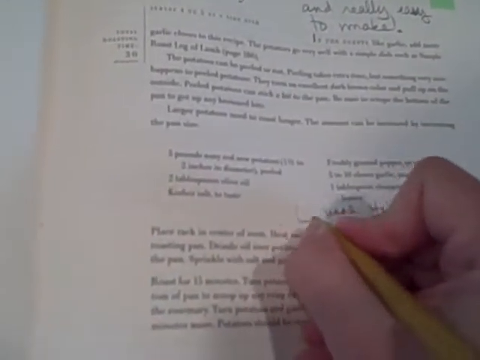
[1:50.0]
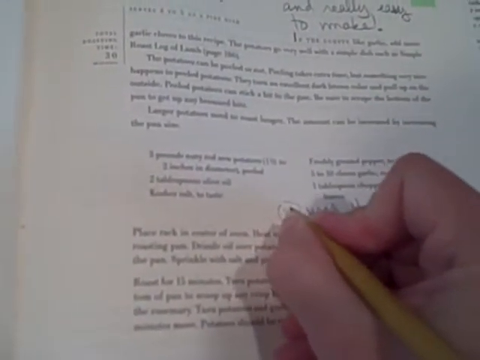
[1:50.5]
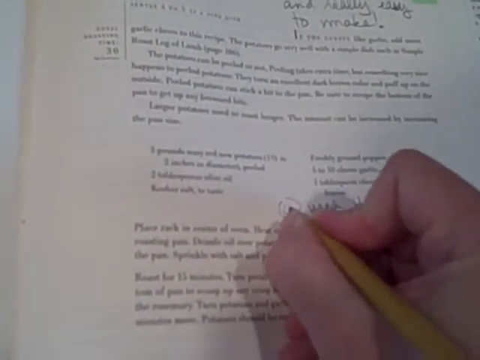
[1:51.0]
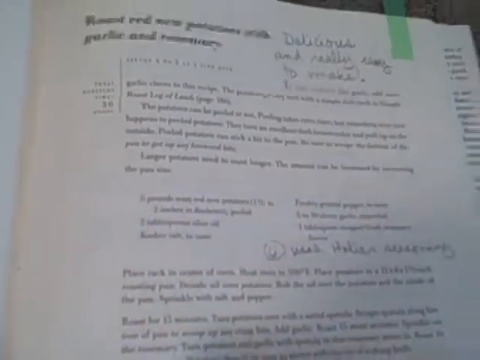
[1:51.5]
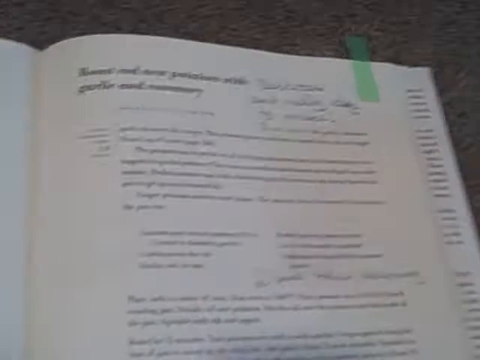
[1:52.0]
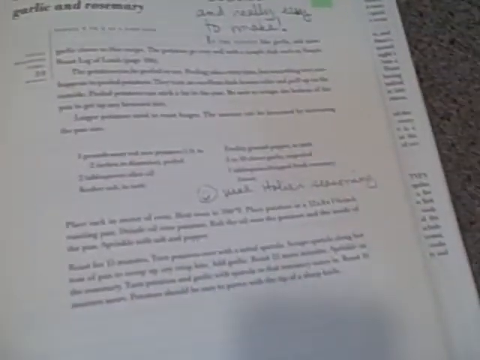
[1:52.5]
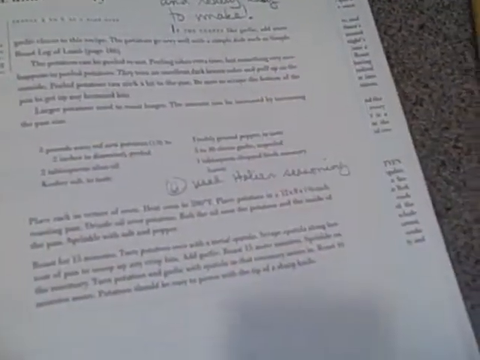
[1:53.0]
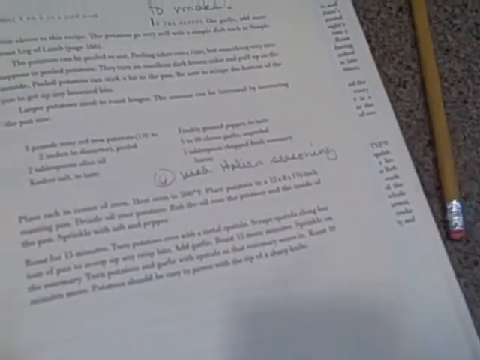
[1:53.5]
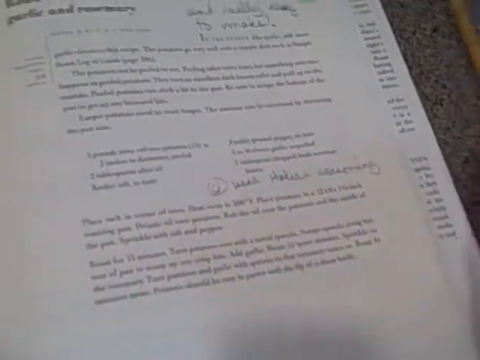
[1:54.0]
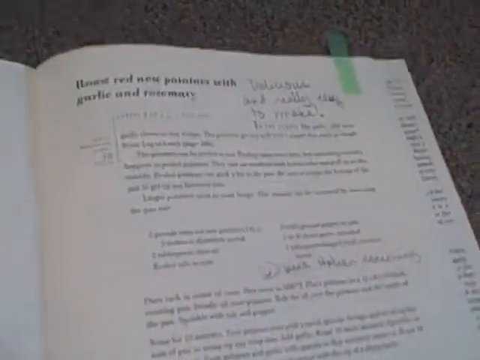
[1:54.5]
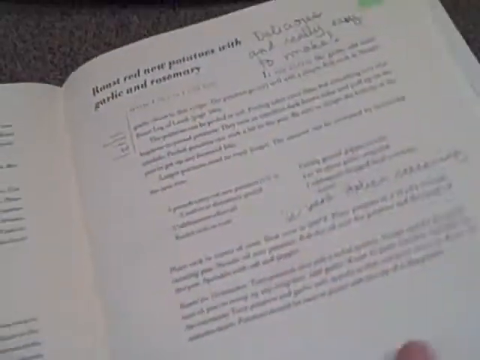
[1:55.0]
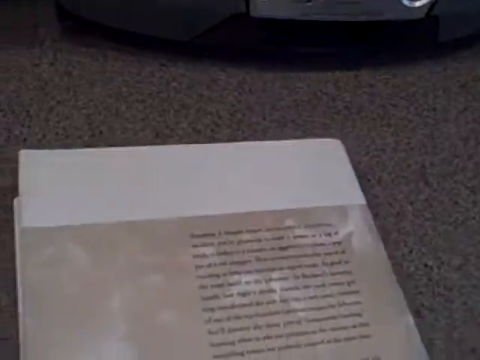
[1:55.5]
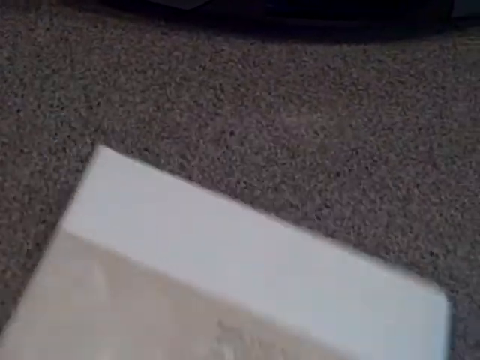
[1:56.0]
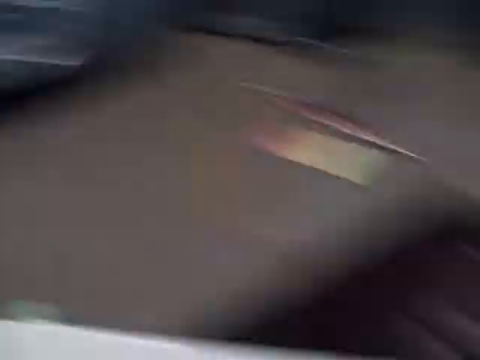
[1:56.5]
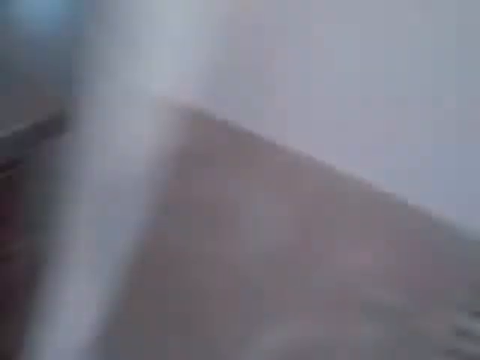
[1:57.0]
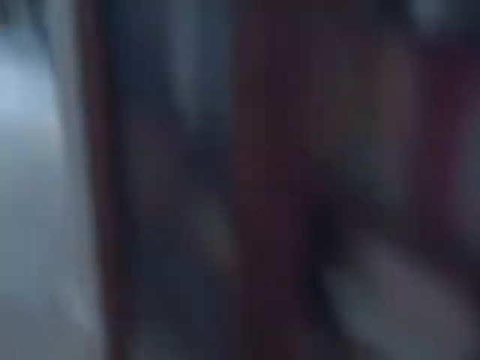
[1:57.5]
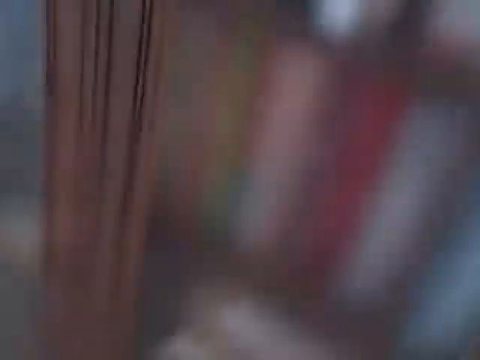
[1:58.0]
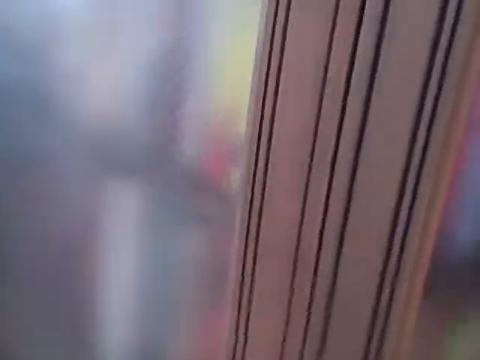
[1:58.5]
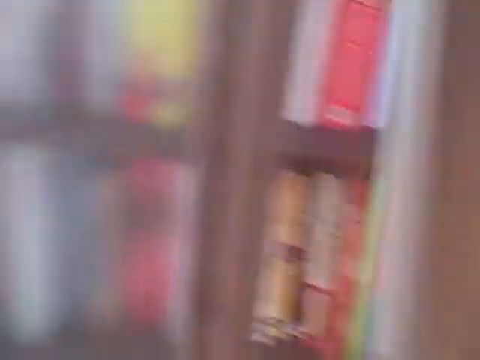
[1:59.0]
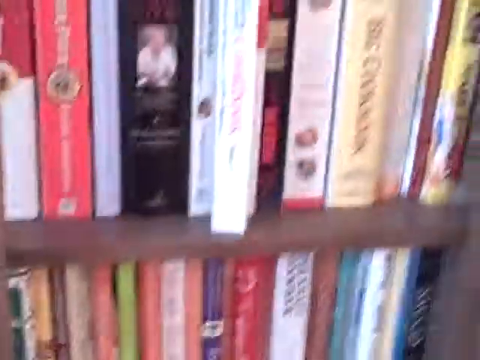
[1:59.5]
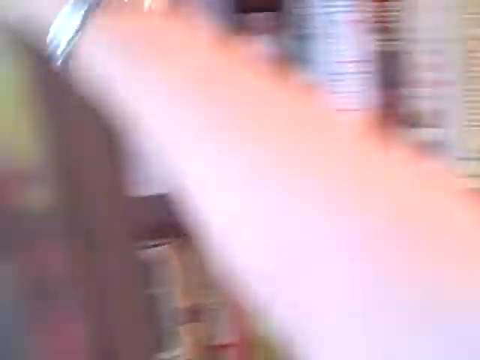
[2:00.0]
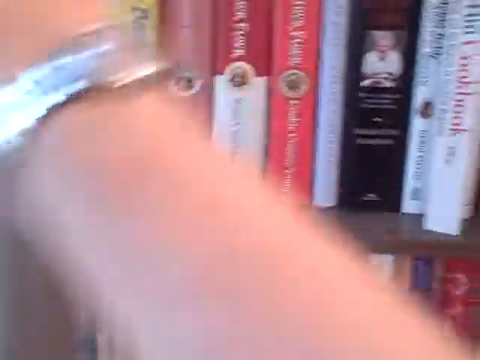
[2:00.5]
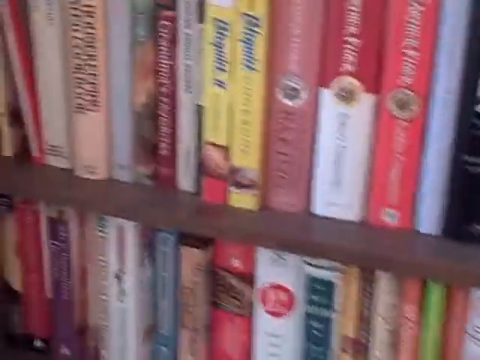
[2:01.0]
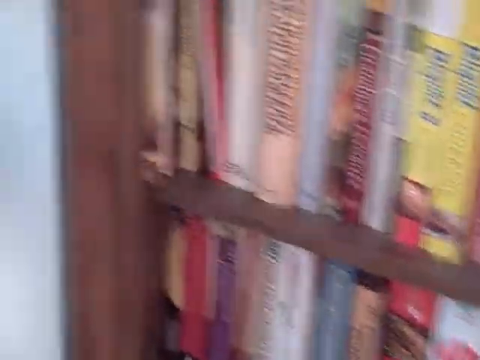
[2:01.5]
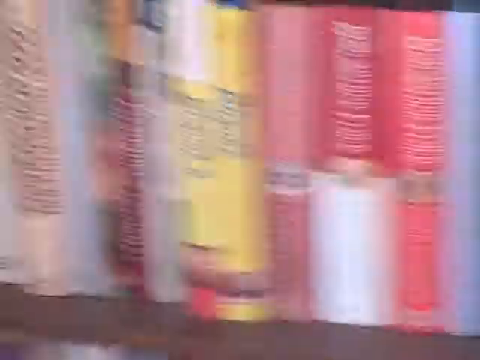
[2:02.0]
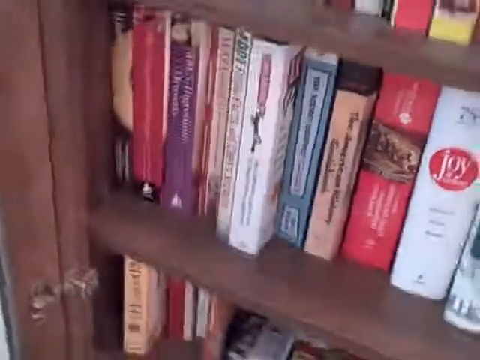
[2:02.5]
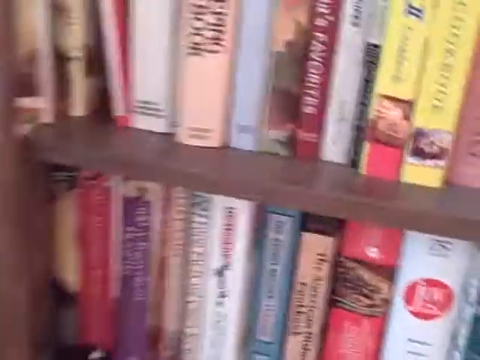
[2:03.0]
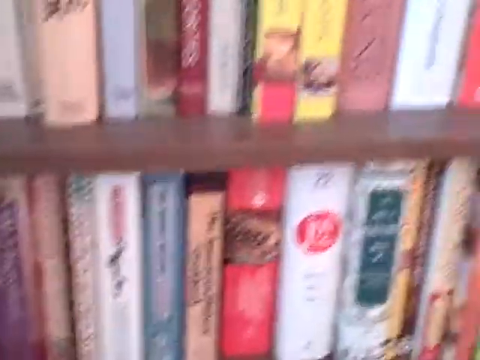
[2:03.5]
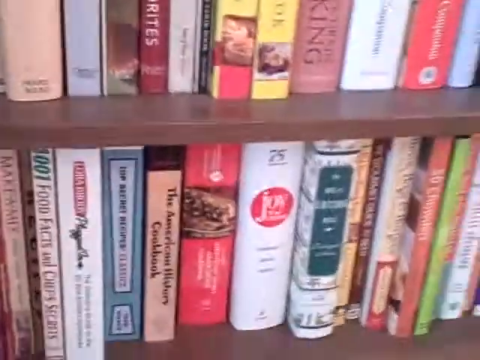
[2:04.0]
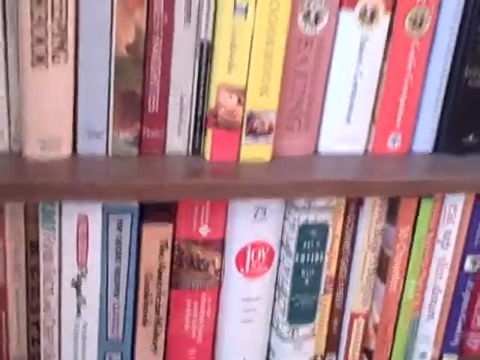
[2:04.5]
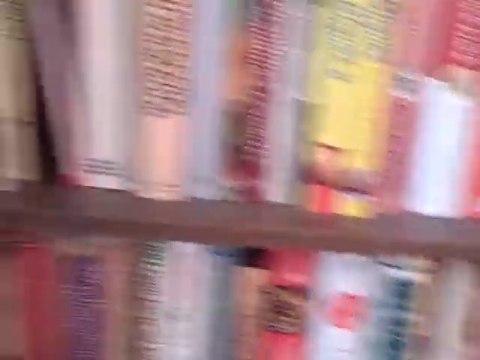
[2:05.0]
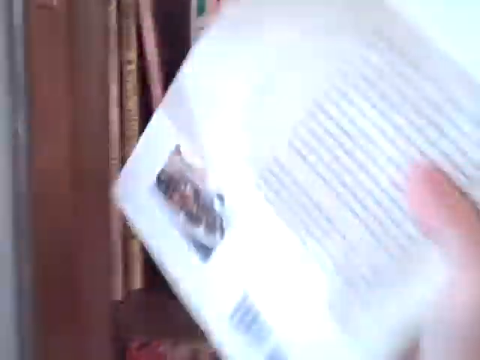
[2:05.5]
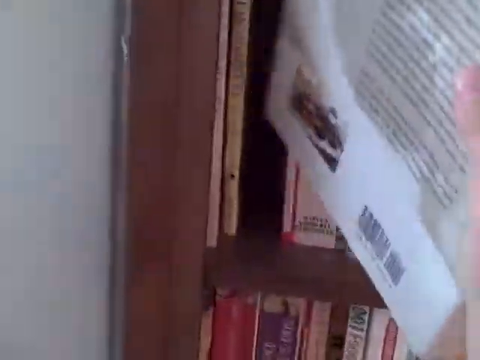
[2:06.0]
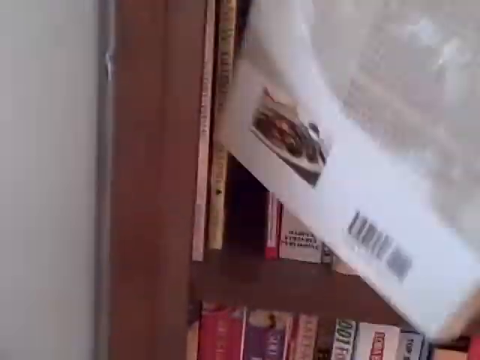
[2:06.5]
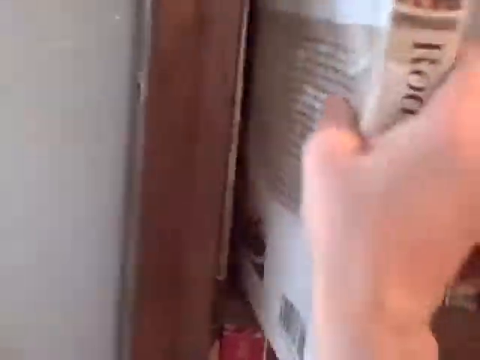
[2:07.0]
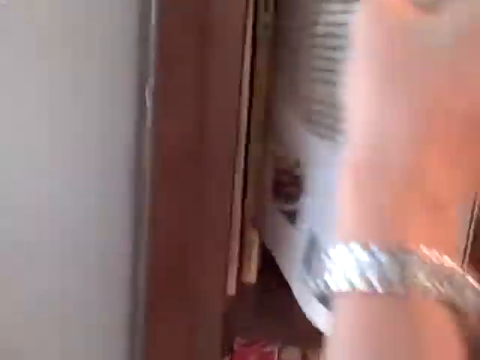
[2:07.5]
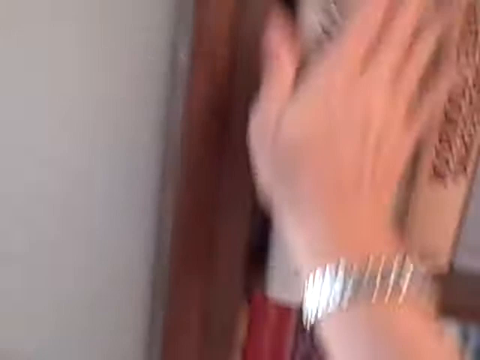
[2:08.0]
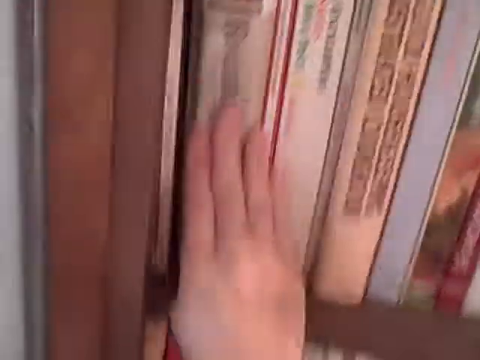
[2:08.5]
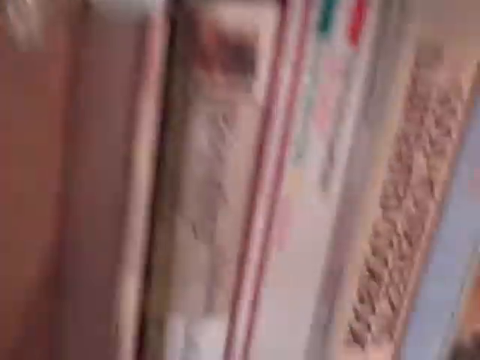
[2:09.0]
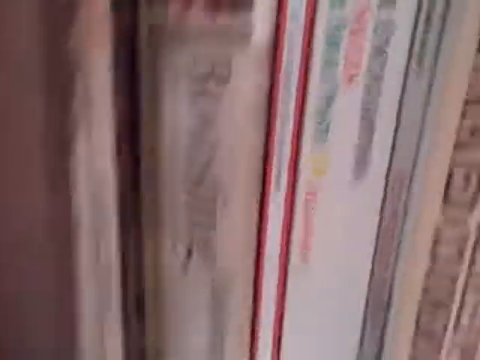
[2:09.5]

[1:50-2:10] She draws a circle next to where she wrote about the Italian seasoning, which looks to be a smiley face. She closes the book, and the camera shakes as it points to what looks like a bookcase. The bookcase has frosted glass at the front, so its contents show only as silhouettes. She opens the cabinet door on the right-hand side first, then the left, and places the book third along among a lot of other recipe books. The book selection is very colourful, all different colours, likely recipe books. It is still daytime and the camera is quite shaky. As the camera moves, a quick shot shows the stereo system, and the pencil she left is still rolling on the gray granite worktop.